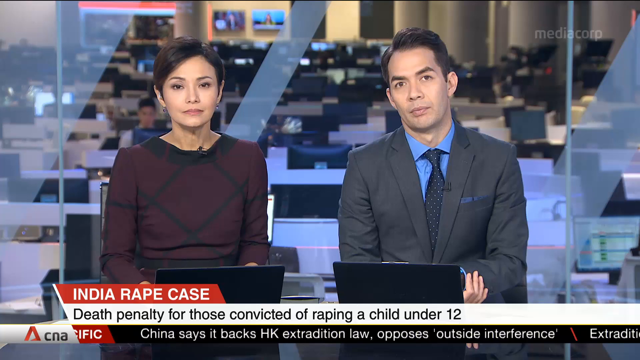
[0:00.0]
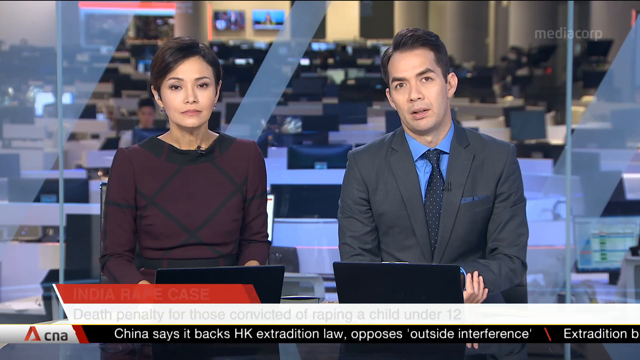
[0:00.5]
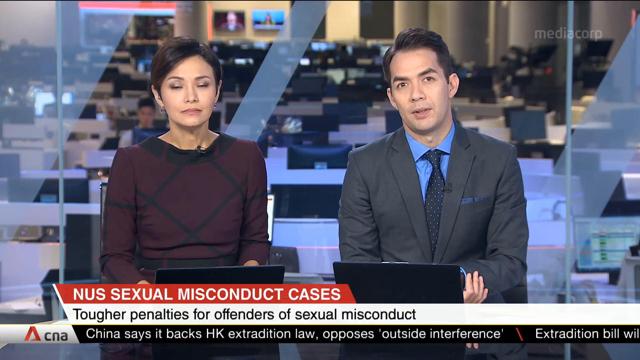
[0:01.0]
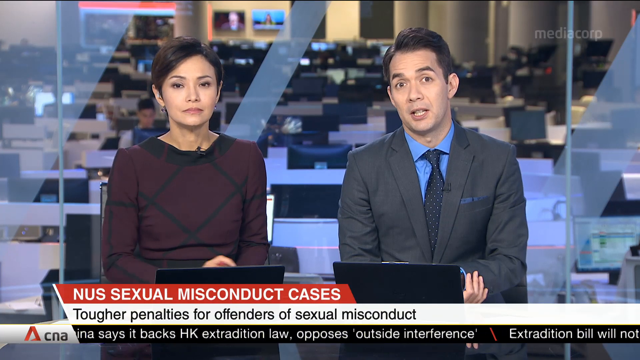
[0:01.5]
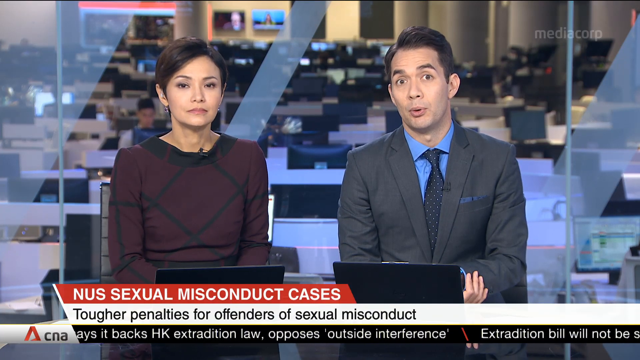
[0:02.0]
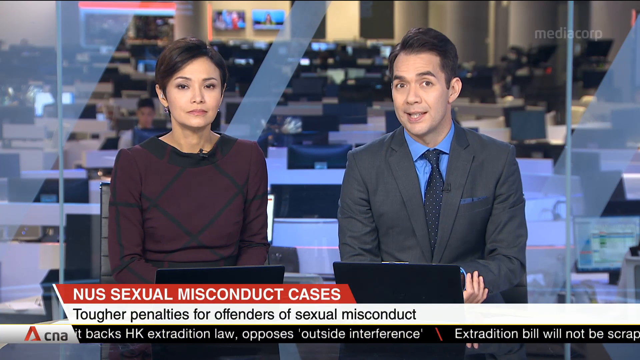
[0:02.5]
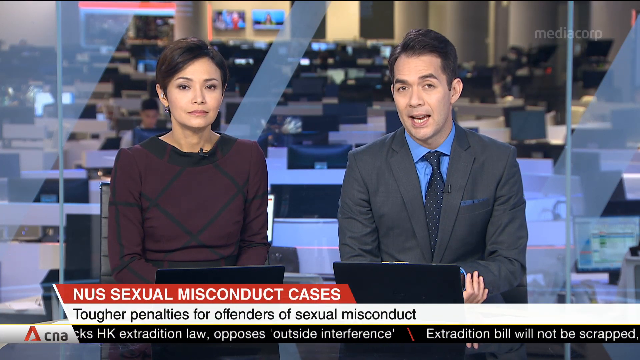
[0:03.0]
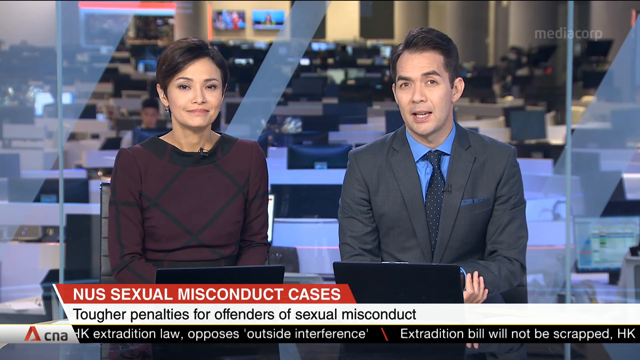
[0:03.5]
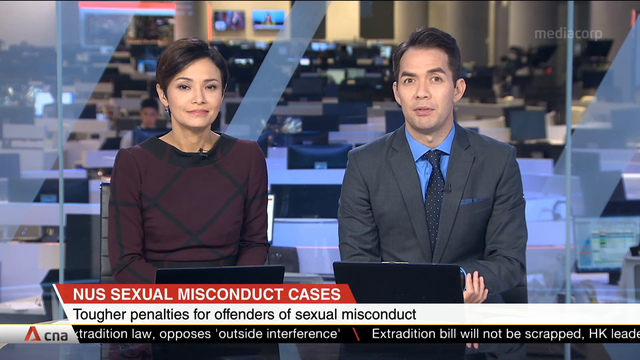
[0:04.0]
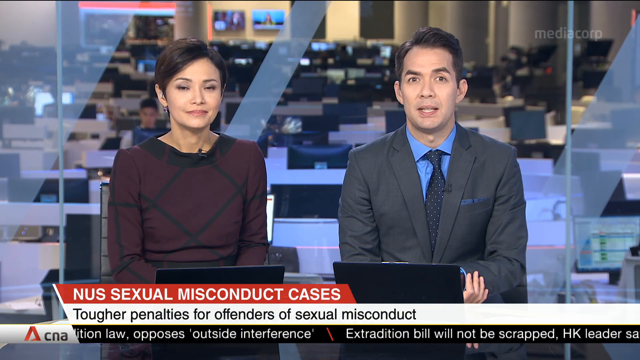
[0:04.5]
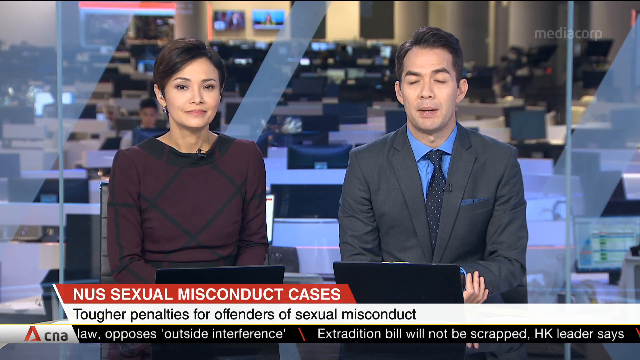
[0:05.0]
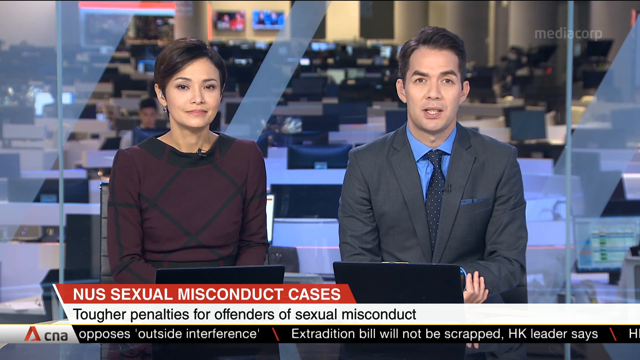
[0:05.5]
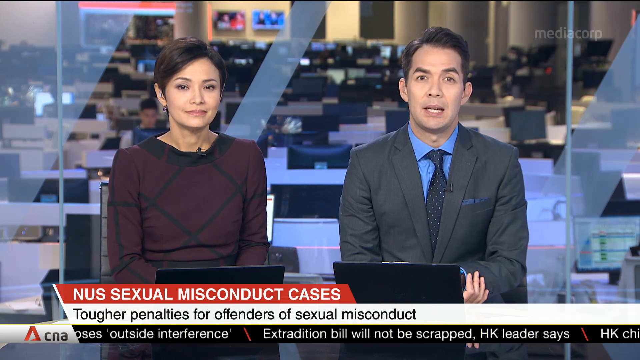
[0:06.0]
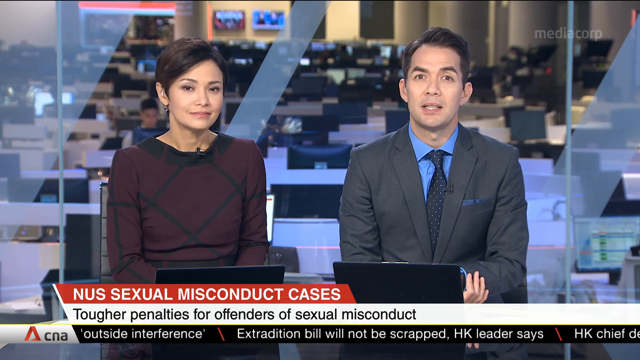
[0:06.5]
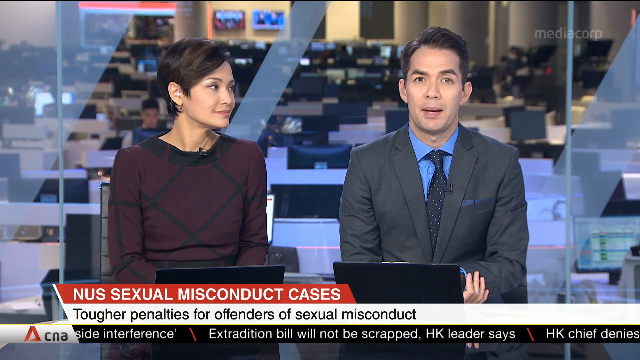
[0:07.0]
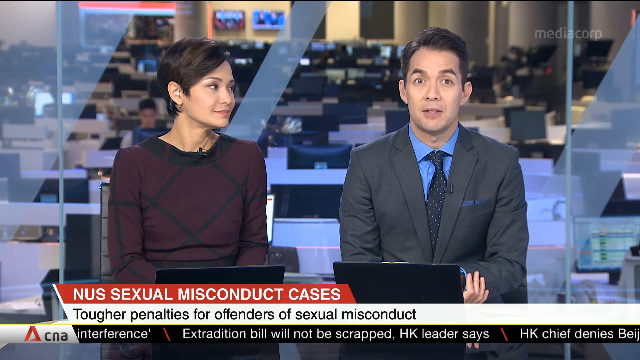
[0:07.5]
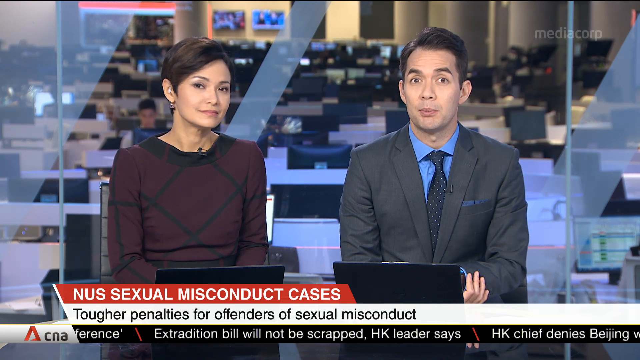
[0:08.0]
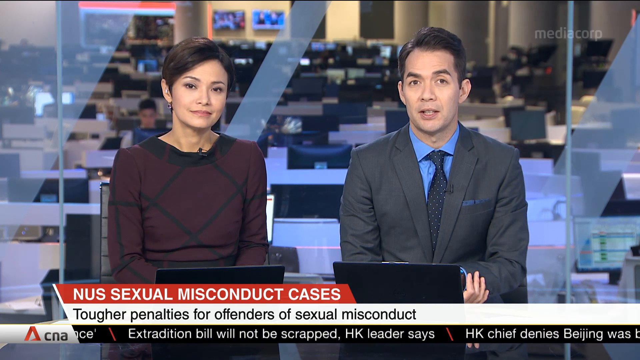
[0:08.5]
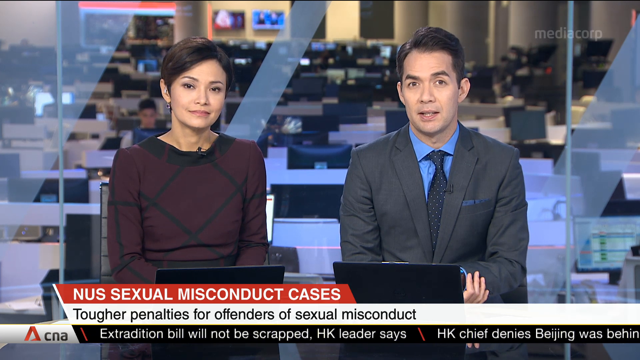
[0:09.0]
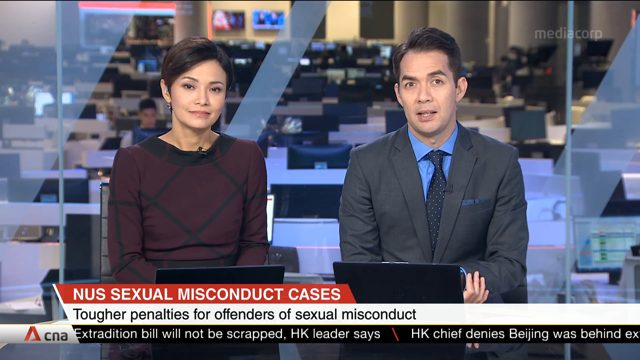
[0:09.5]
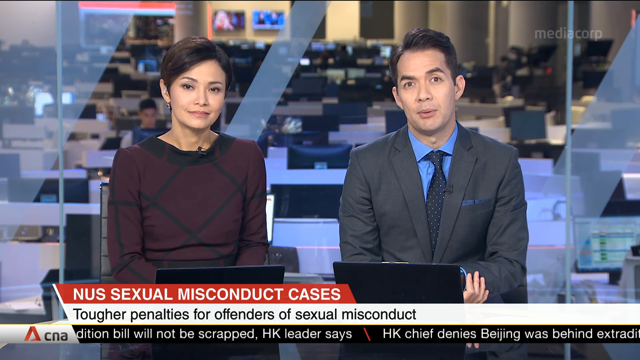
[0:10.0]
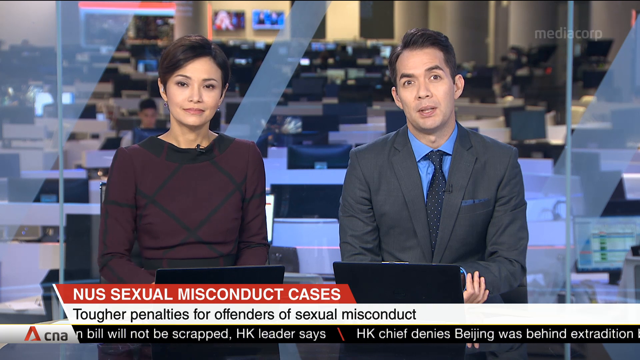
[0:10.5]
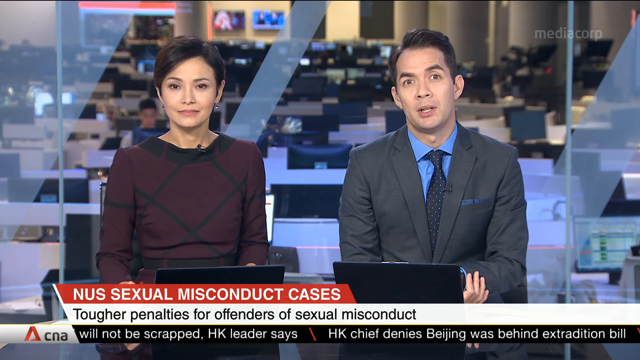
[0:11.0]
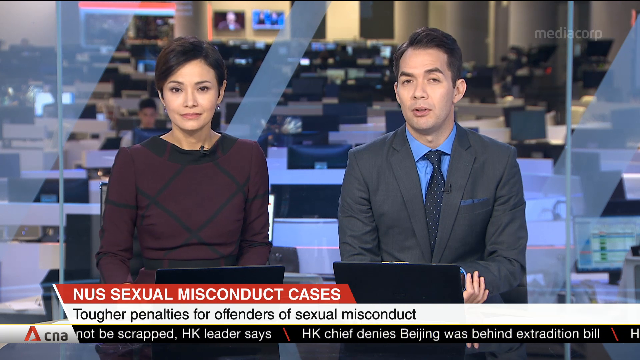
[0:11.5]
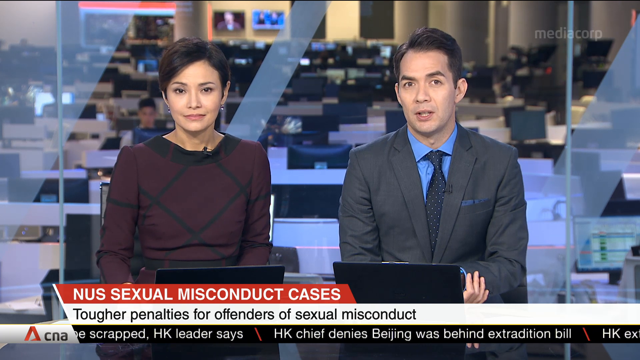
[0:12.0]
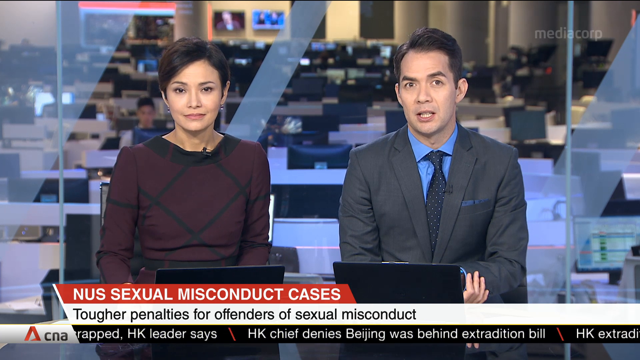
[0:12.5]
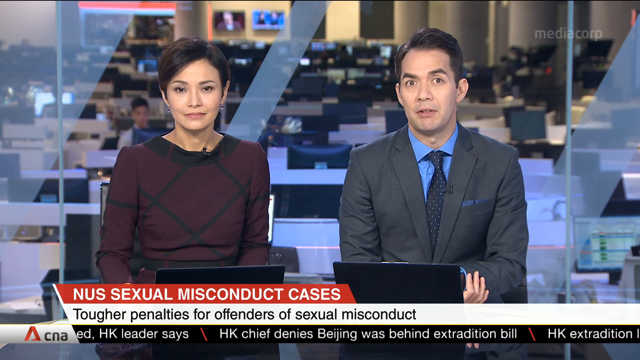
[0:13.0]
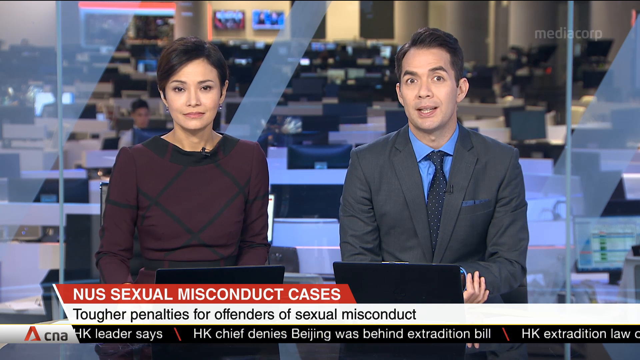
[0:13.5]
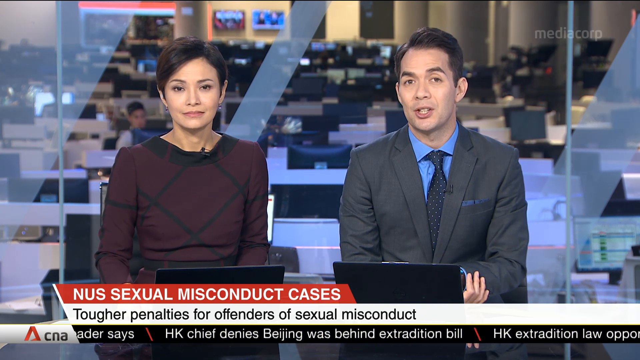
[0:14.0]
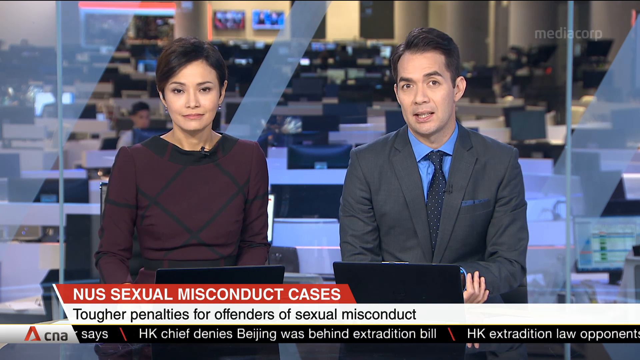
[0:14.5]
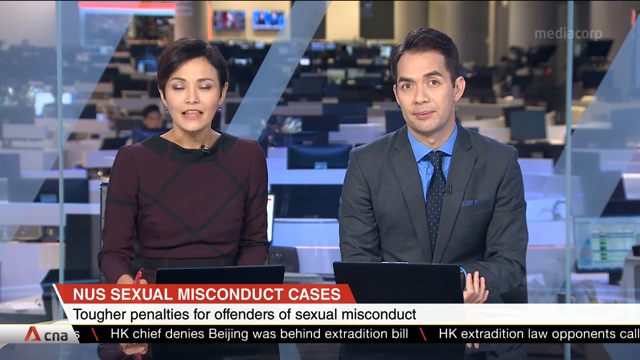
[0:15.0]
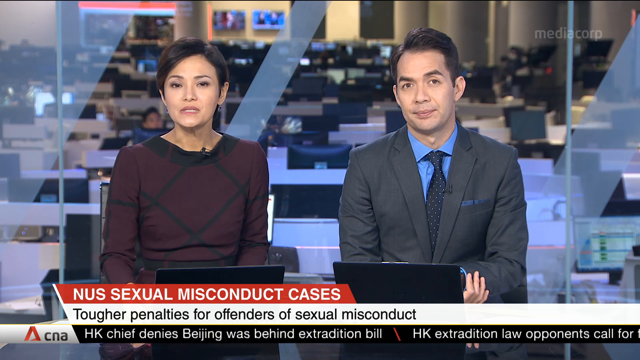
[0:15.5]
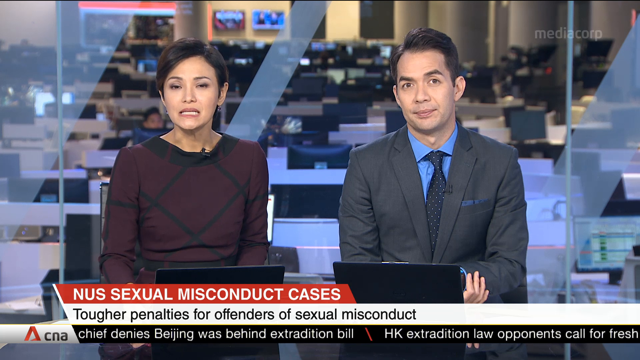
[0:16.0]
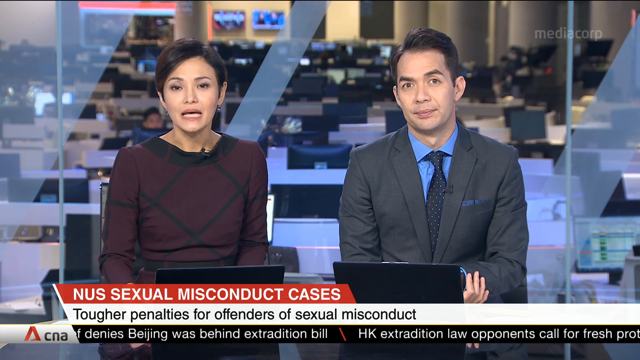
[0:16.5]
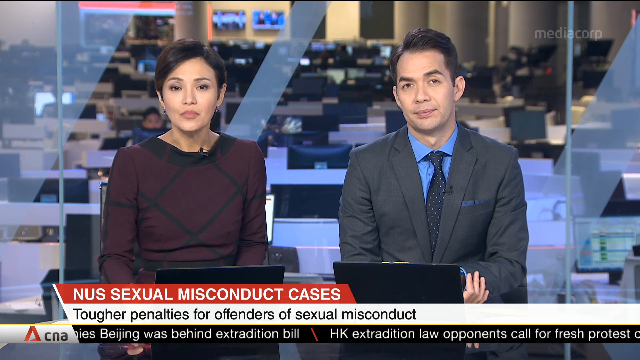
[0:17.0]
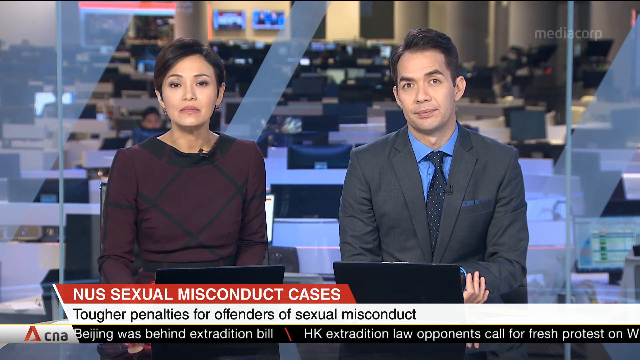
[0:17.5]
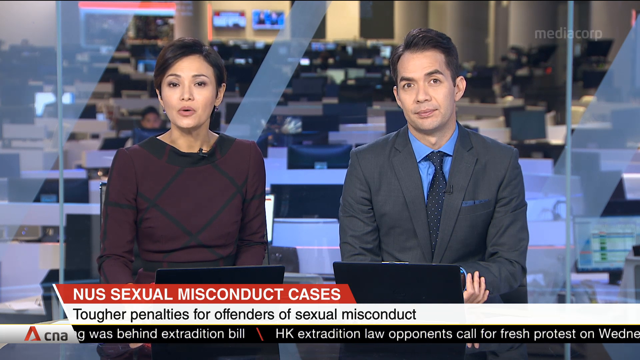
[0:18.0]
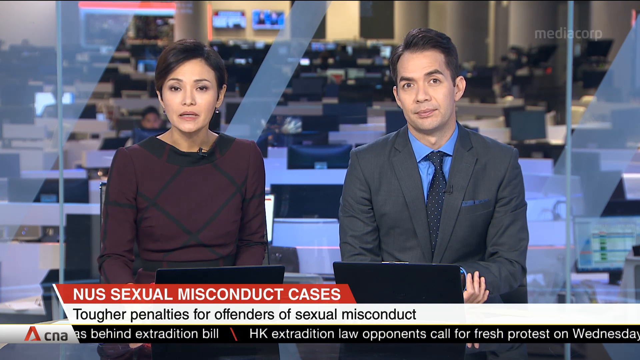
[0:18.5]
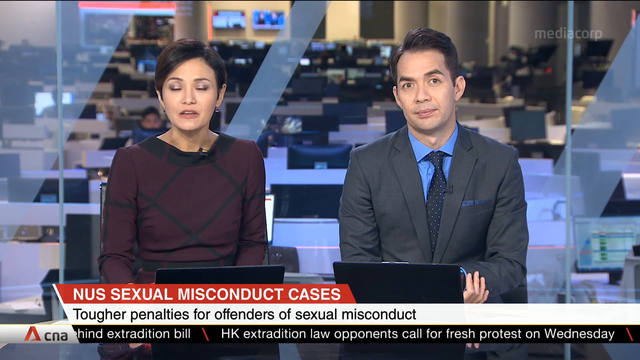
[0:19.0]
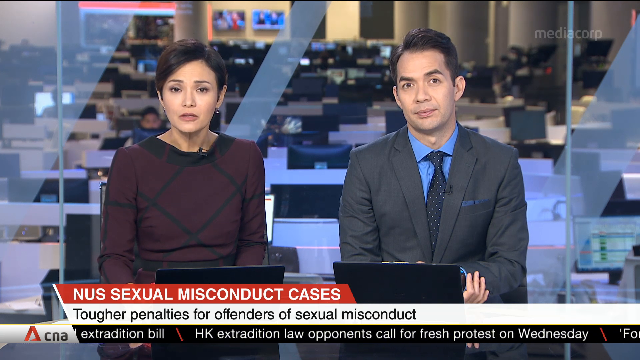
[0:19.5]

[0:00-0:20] A man and a woman sit in a newsroom. The woman wears a maroon top with black lines; she has short hair and pink lips. The man wears a black suit, a blue shirt and a dark blue tie with polka dots. Both have laptops in front of them, and behind them there are many more laptops in the background, with only one visible person in motion. Underneath them is a headline: "India rape case", "NUS sexual misconduct cases", "tougher penalties for offenders of sexual misconduct". Further text underneath reads "HK chief denies Beijing behind extradition bill."